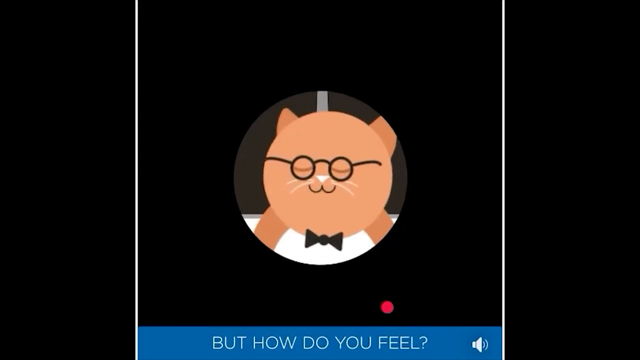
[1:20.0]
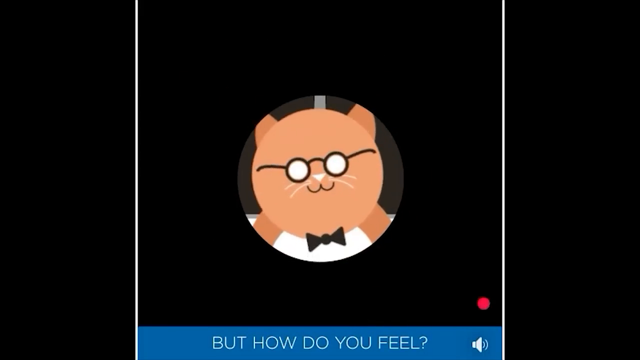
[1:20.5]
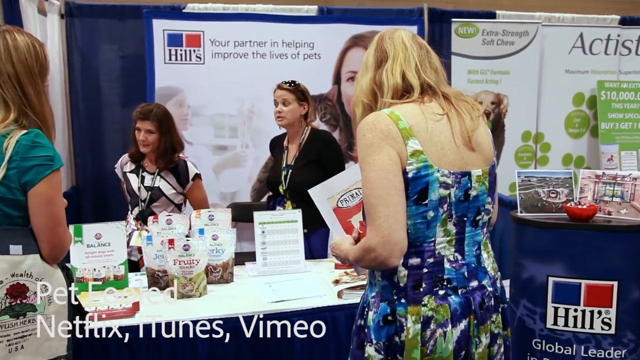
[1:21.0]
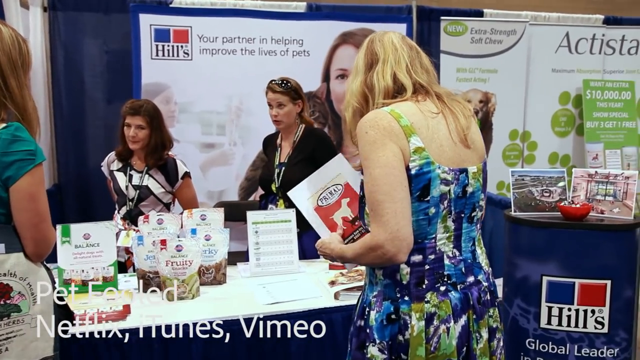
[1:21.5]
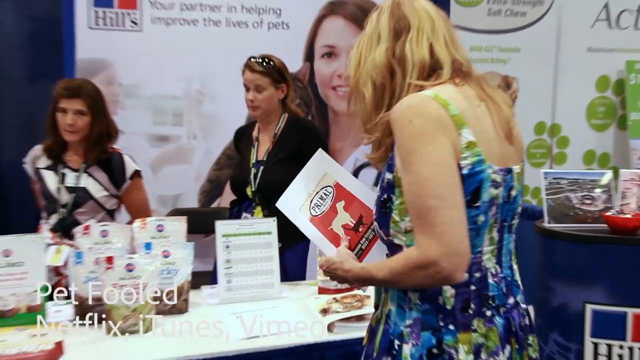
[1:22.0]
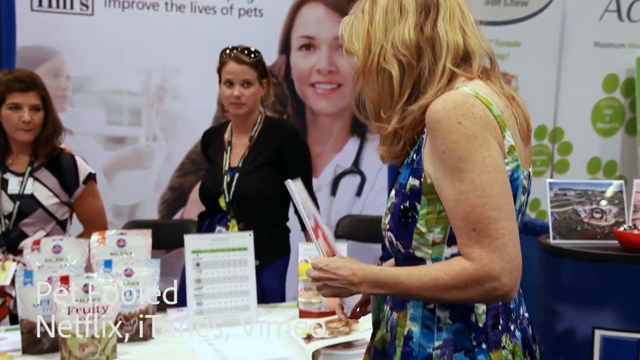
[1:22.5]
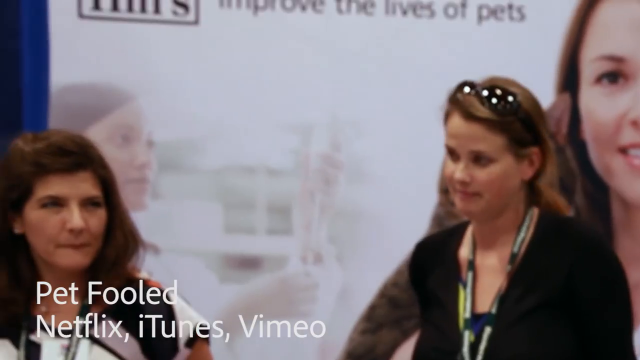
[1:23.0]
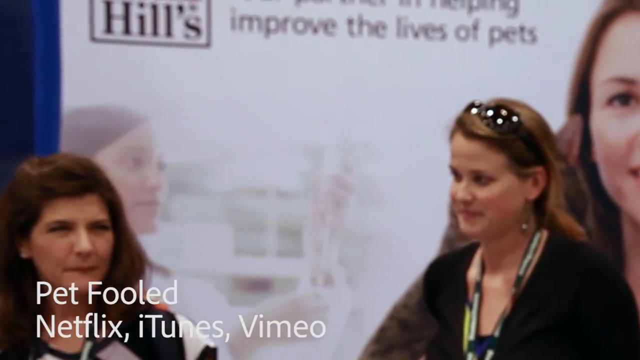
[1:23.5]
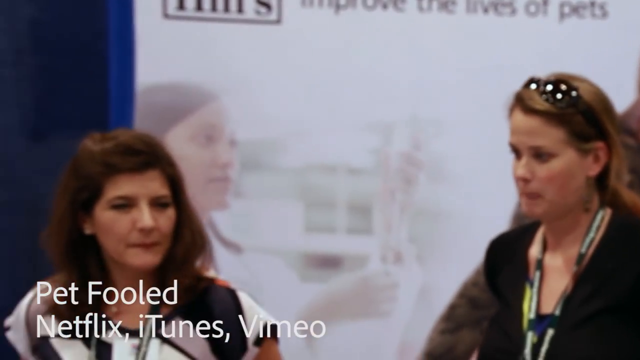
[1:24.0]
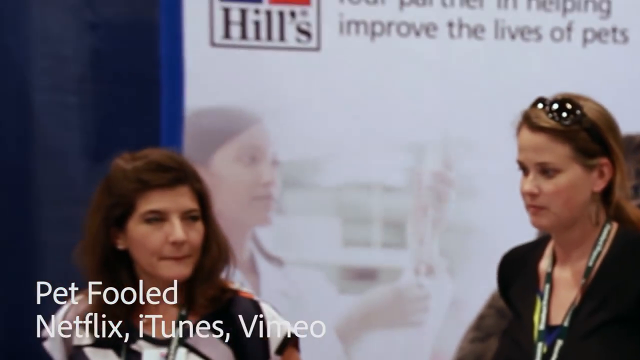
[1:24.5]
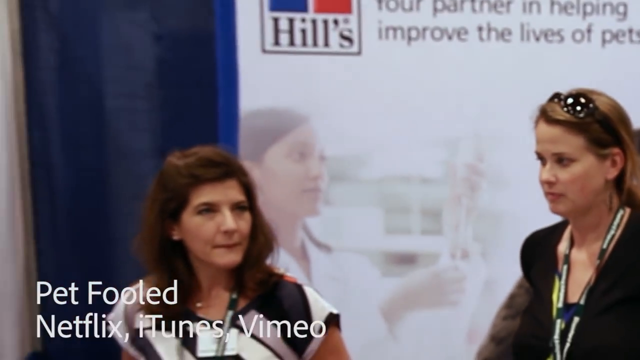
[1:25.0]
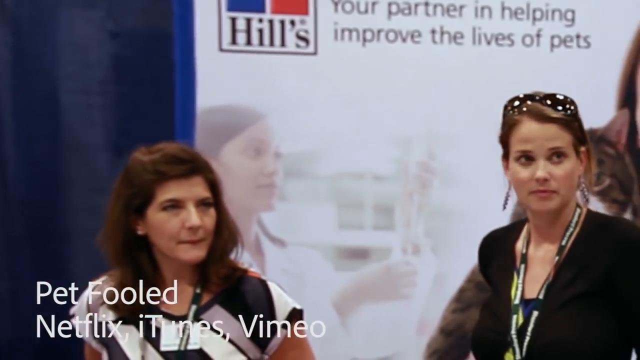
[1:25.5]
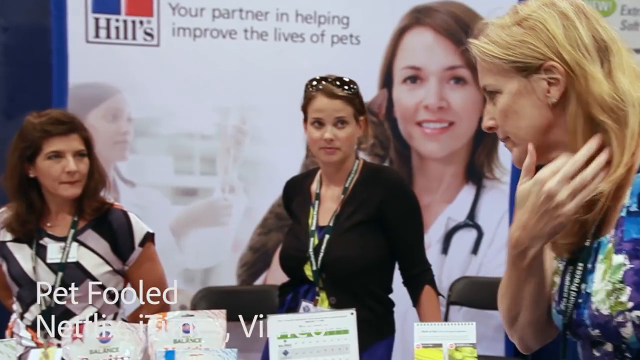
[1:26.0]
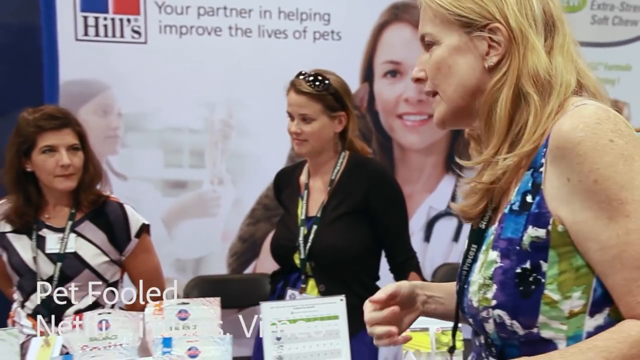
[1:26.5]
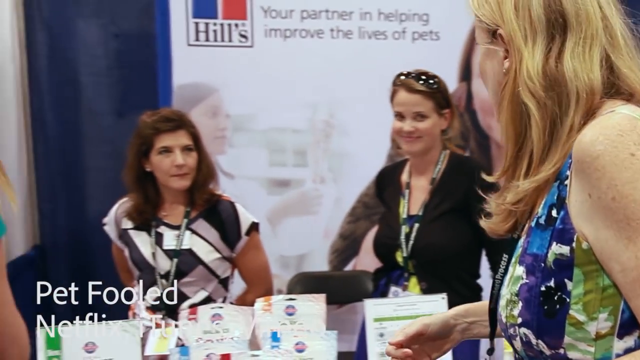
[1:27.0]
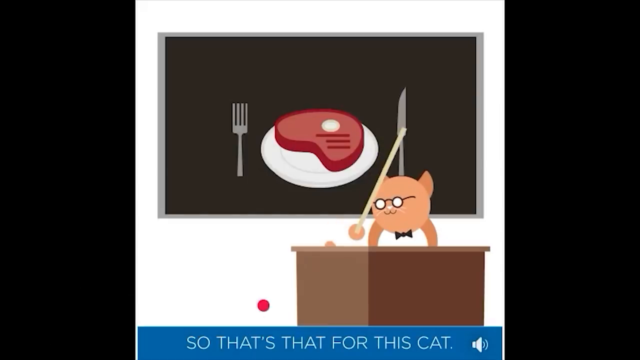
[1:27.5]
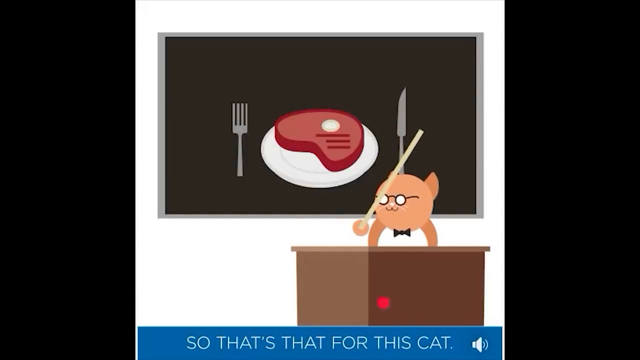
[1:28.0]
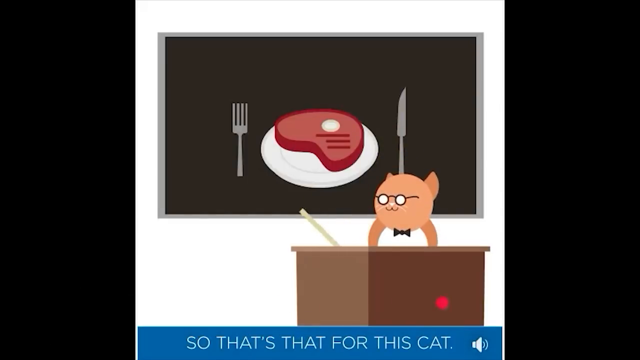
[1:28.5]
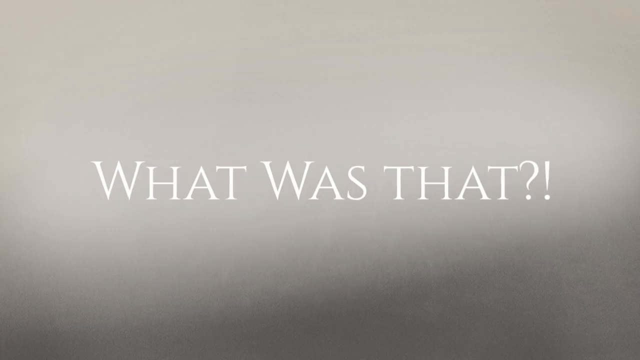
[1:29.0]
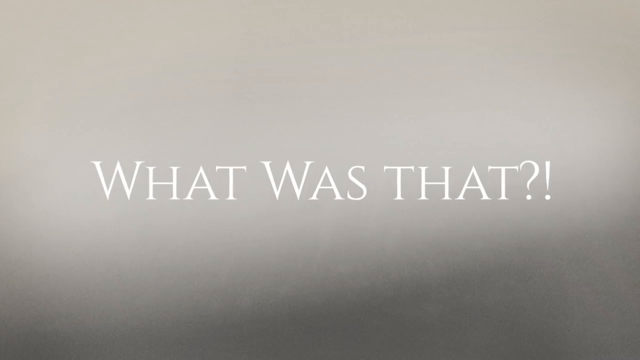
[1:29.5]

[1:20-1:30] The video zooms into the cat, puts a circle around it and zooms in further. Real footage follows: at what appears to be a convention of some kind, a lady with blonde hair goes up to a stand selling Hills animal food, where two members of staff work. The Hills logo is in the background, along with the words "your partner in helping improve the lives of pets." The video returns to the cartoon cat in the classroom with the blackboard, and then a plain screen shows "what was that?" in capital letters.